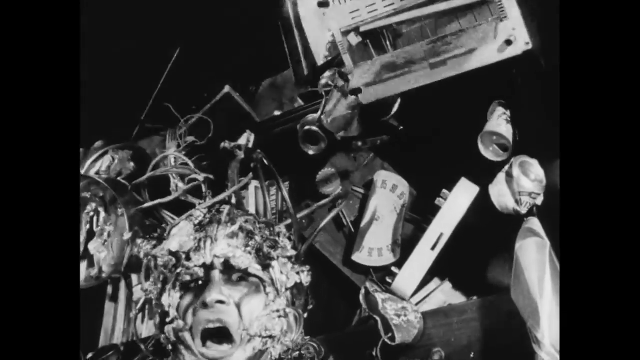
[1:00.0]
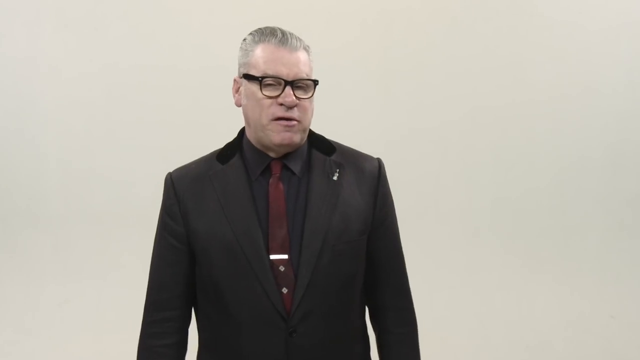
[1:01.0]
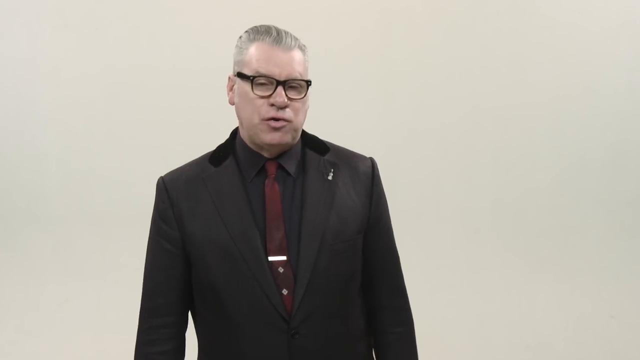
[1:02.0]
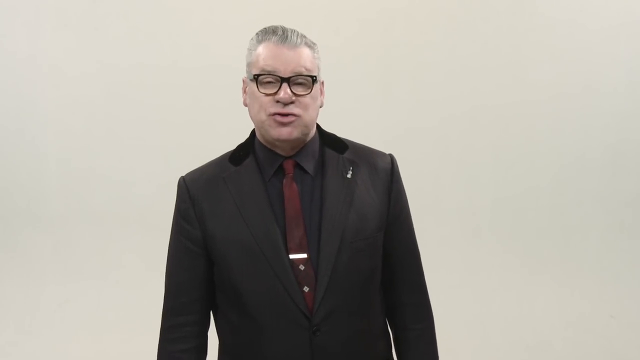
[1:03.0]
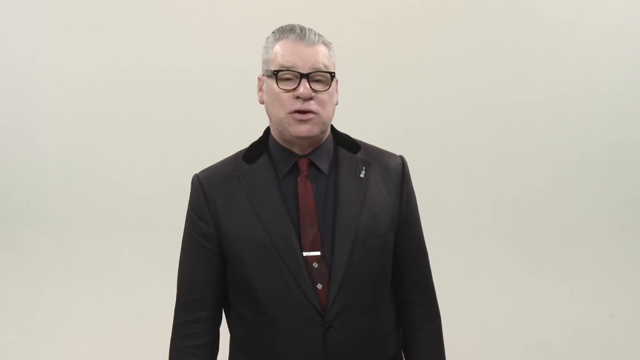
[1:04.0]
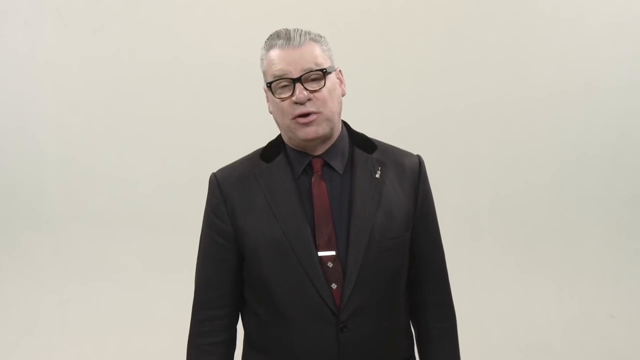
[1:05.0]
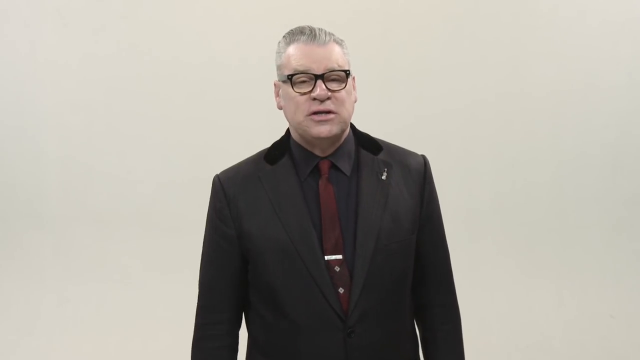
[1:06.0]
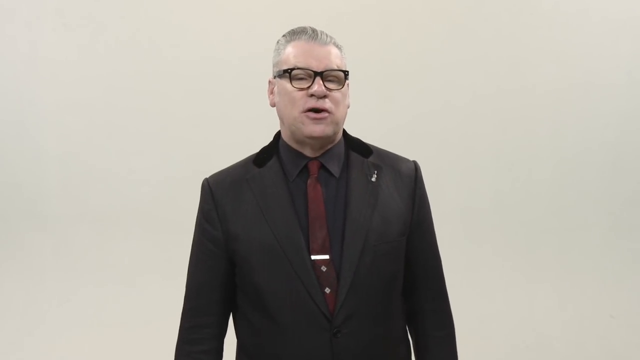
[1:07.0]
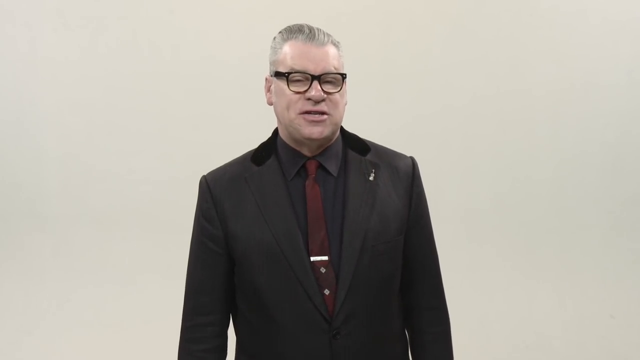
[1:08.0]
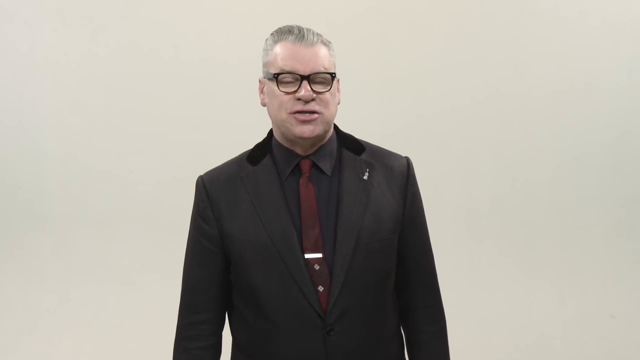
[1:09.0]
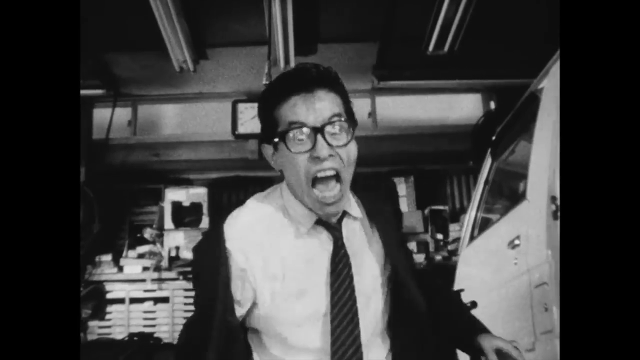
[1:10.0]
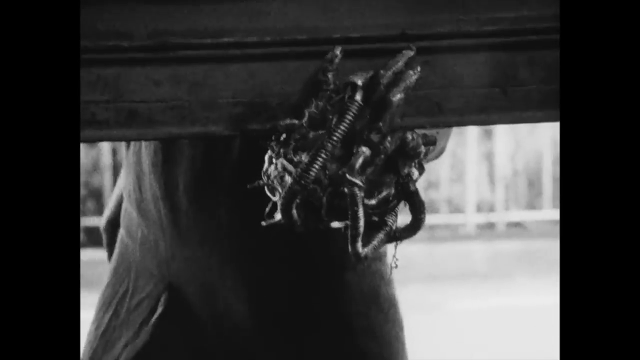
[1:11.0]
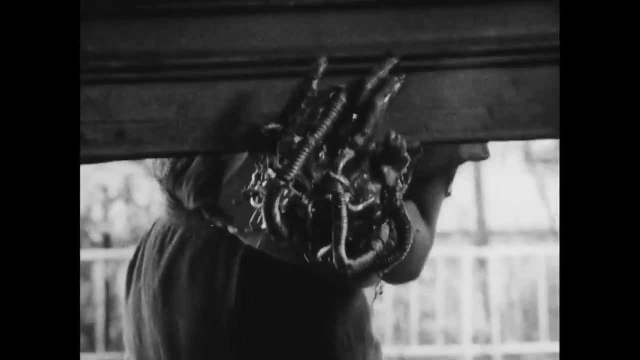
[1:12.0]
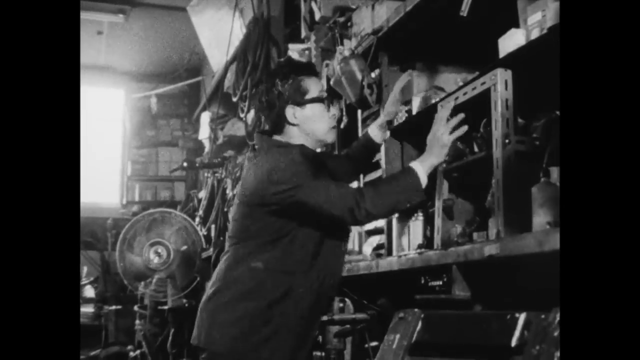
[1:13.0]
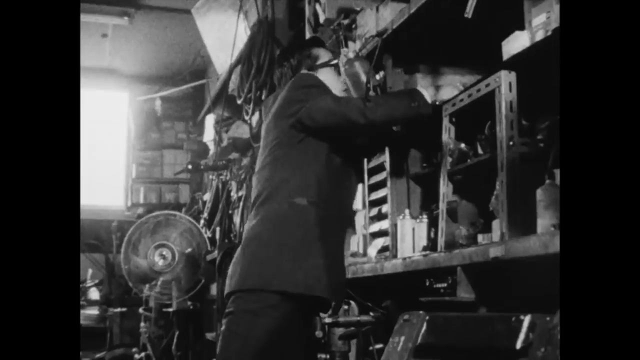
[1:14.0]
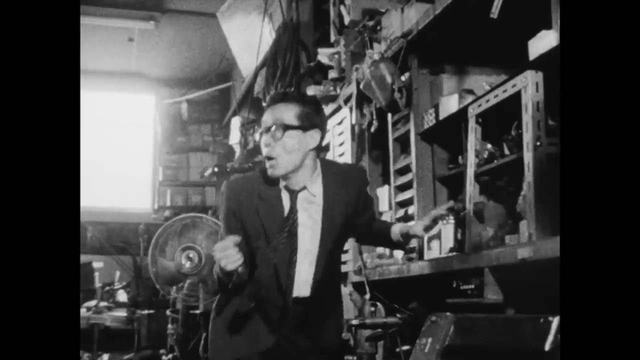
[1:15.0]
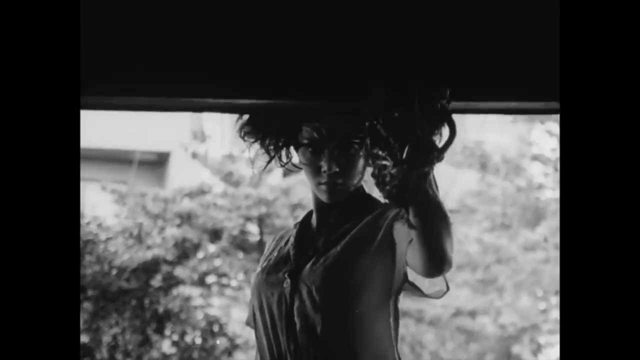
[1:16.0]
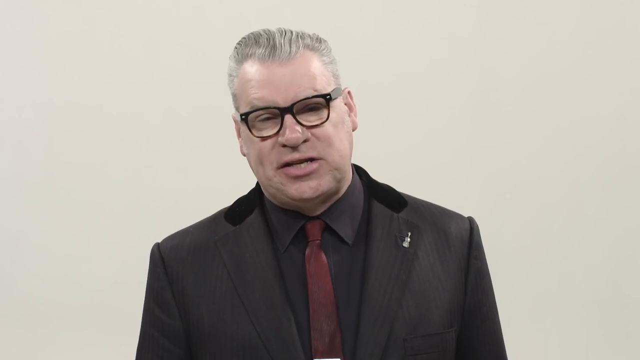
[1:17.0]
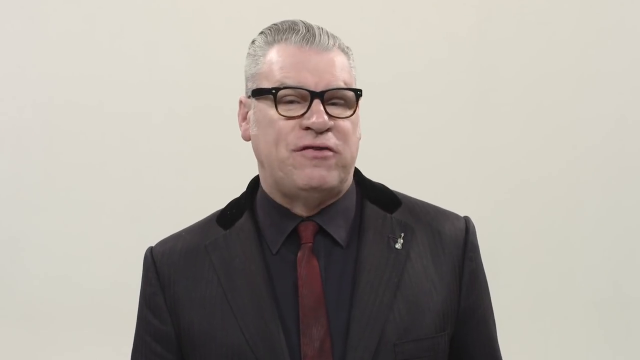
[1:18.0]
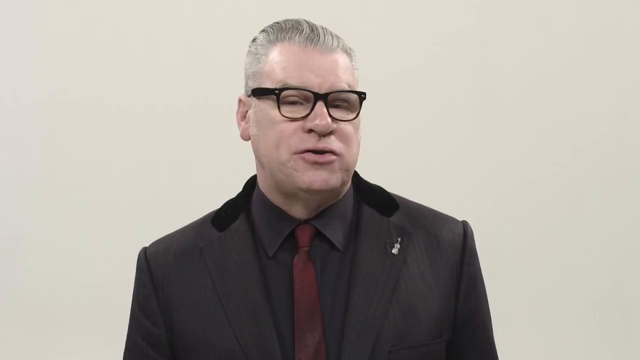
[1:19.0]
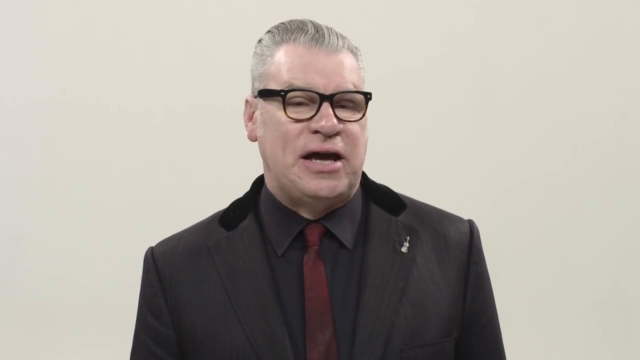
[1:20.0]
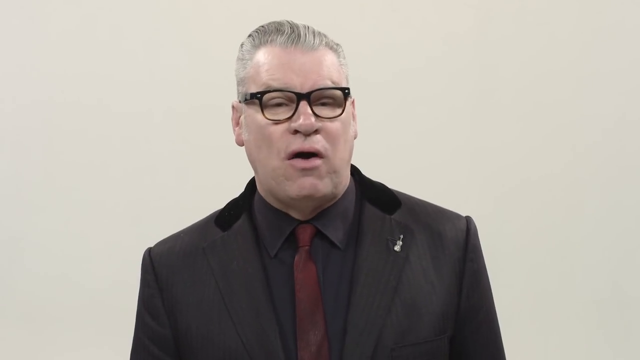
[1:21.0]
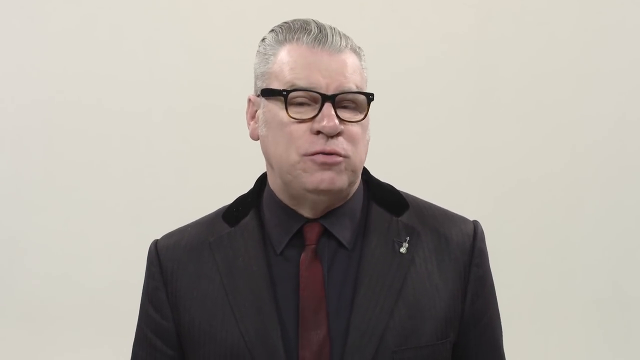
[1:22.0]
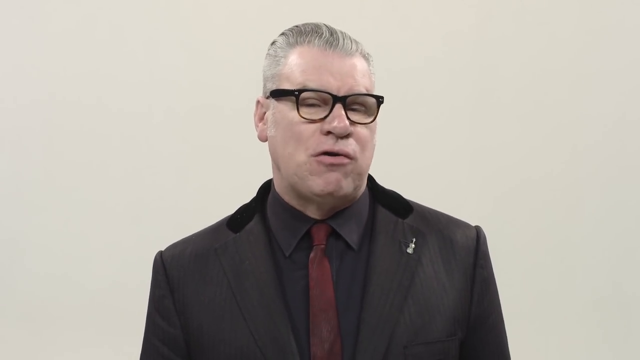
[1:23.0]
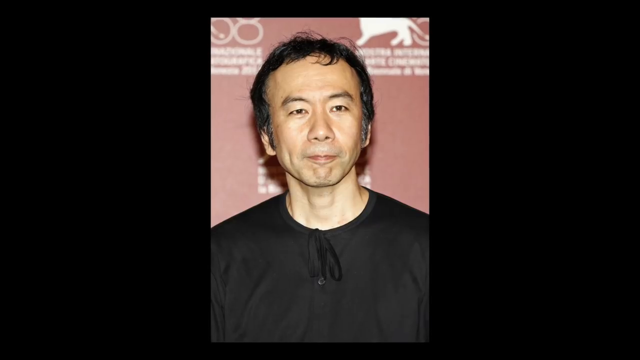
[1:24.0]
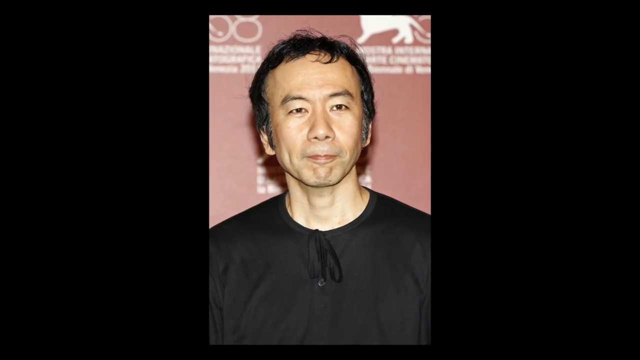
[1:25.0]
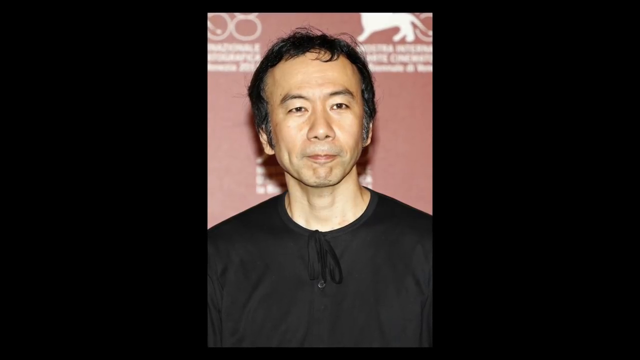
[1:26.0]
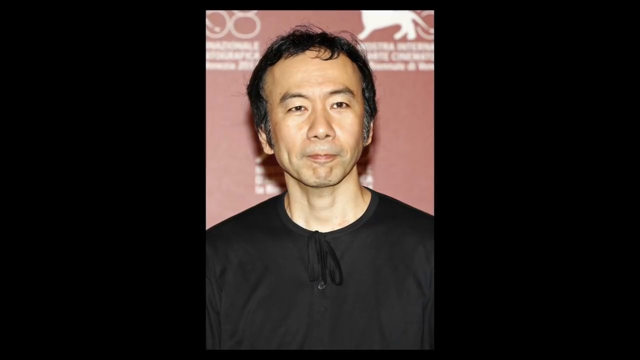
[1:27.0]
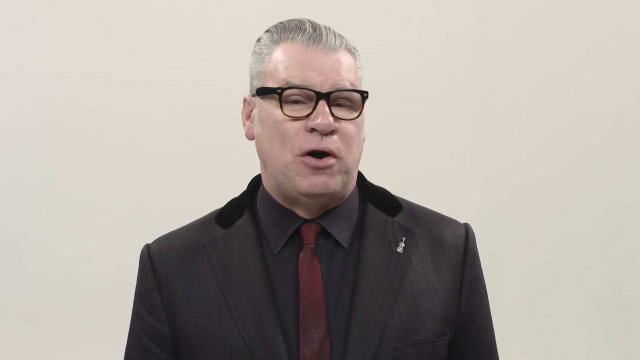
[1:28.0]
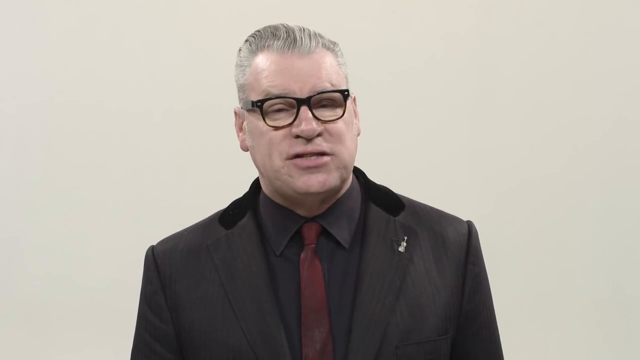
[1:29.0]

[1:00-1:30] The man with the glasses speaks in front of the camera again, his head turned slightly to his left while his eyes stay on the camera. He nods ever so slightly as he speaks, and his shoulders sway slightly left and right. His tie has two diamond shapes just below the tie clip. A clip from a black-and-white movie follows: a man in a black suit jacket, a thin black tie, a white dress shirt and glasses screams at the camera as if afraid of something. An arm made of metal lifts a garage door, while the man who was screaming is at a shelf, clamoring for something on it. The scene flashes back to the robot arm lifting the garage door, and the man grabs what looks like a tire iron from the shelf.